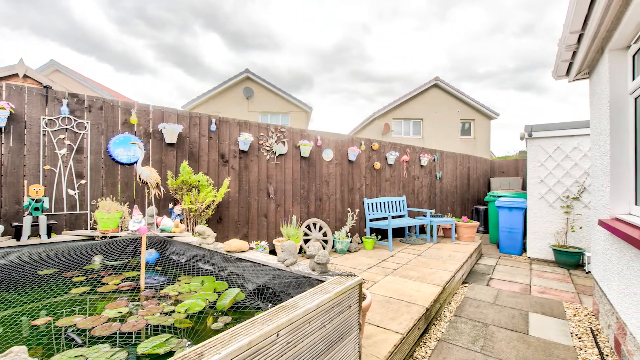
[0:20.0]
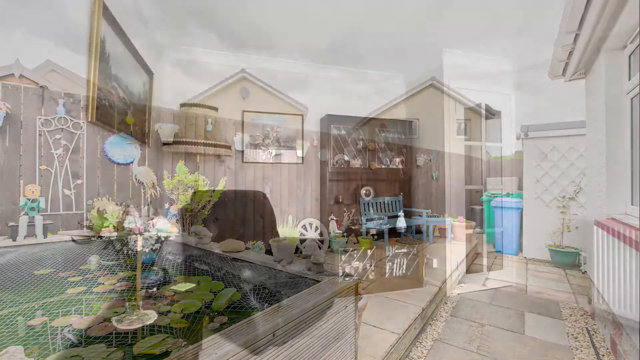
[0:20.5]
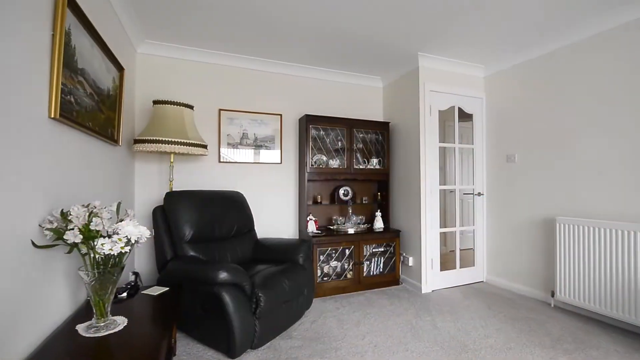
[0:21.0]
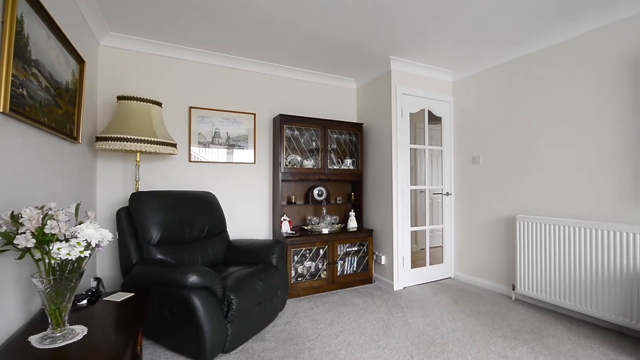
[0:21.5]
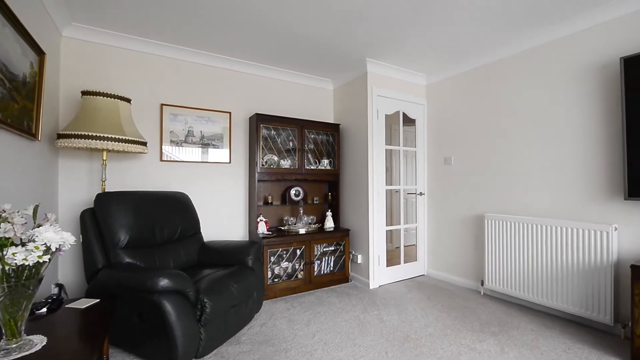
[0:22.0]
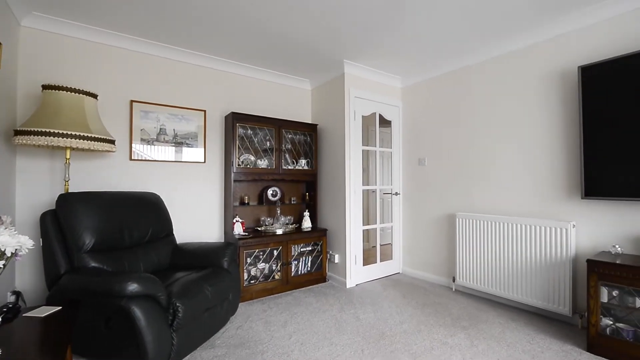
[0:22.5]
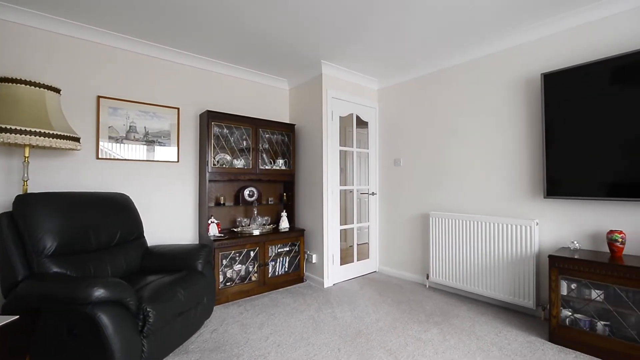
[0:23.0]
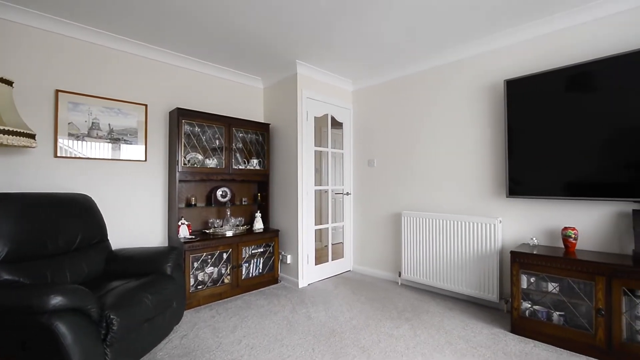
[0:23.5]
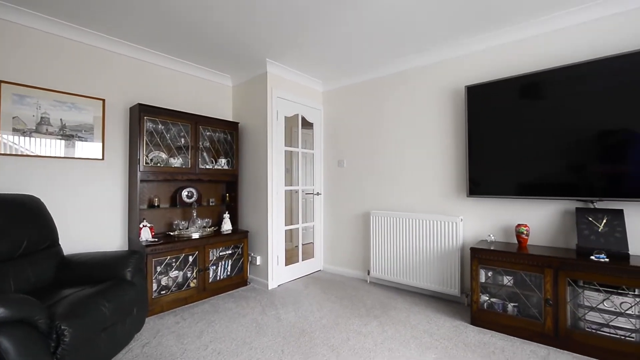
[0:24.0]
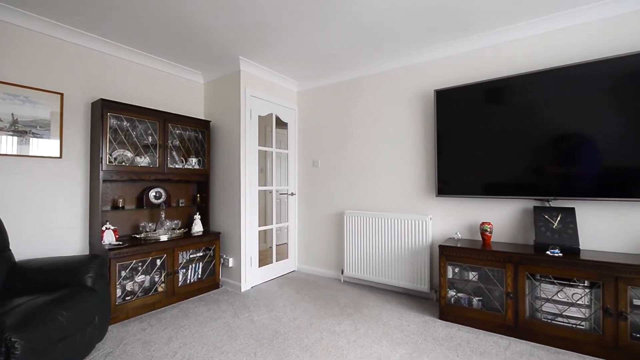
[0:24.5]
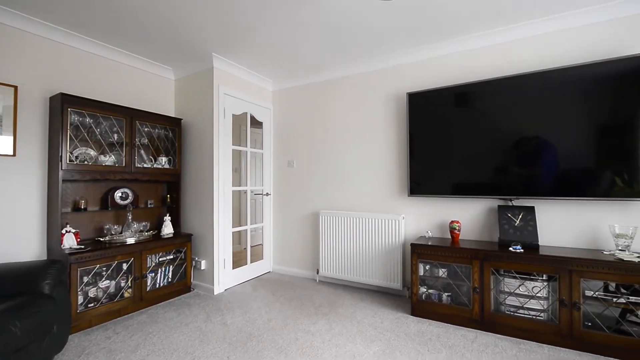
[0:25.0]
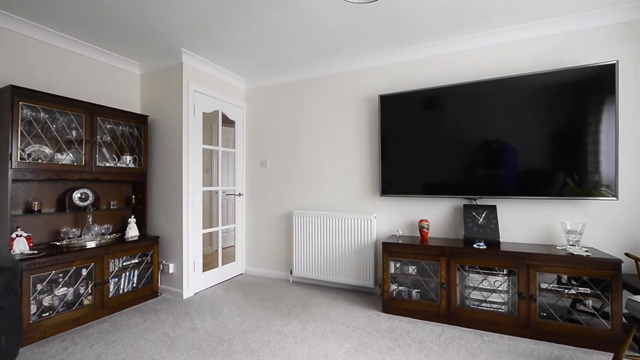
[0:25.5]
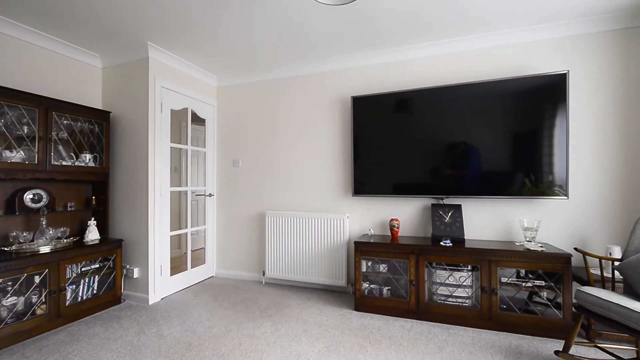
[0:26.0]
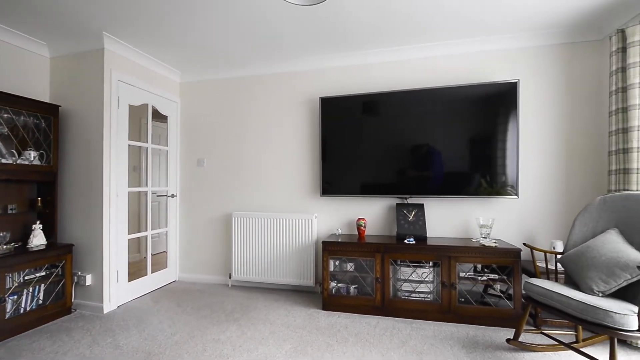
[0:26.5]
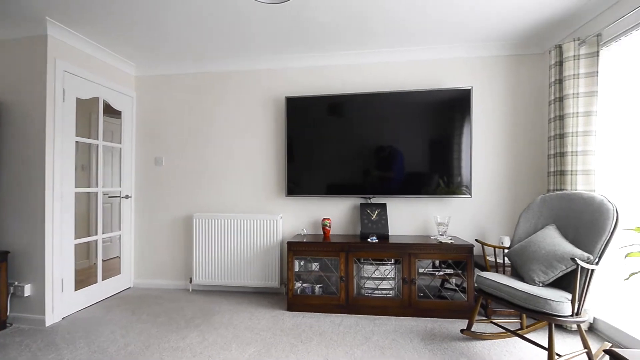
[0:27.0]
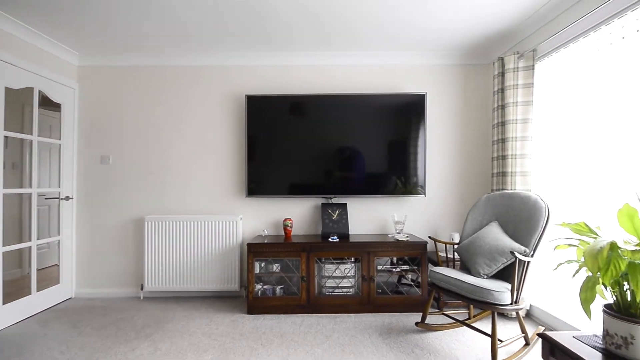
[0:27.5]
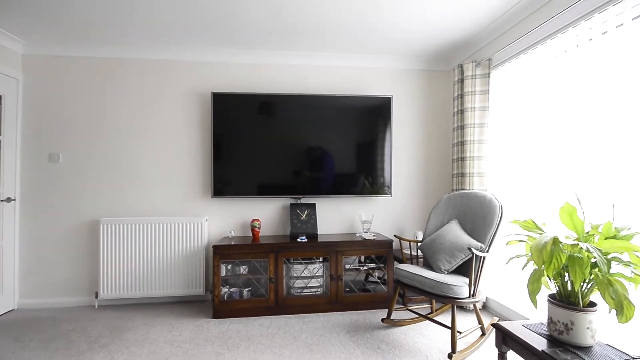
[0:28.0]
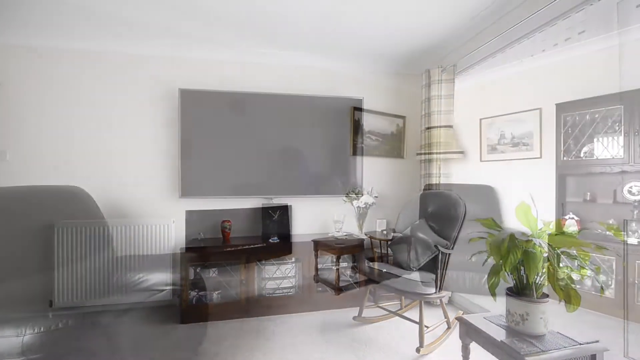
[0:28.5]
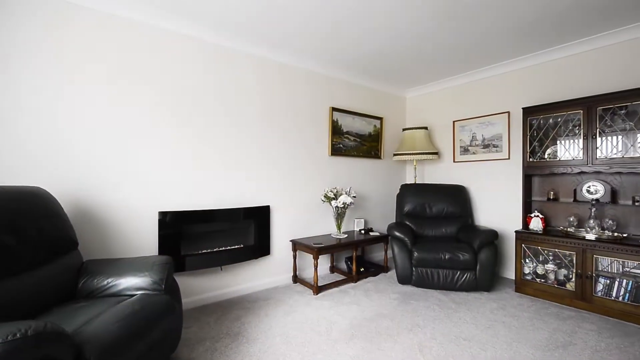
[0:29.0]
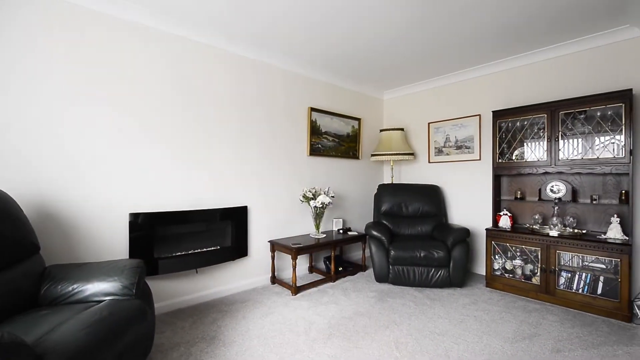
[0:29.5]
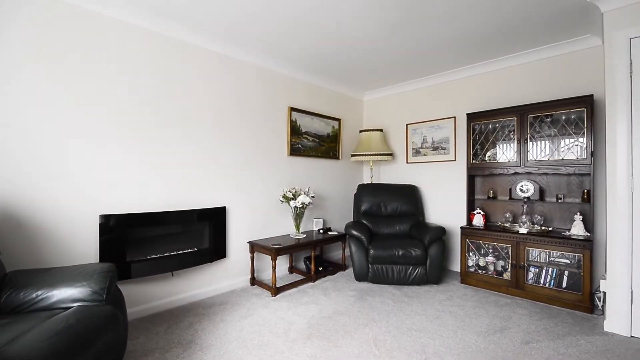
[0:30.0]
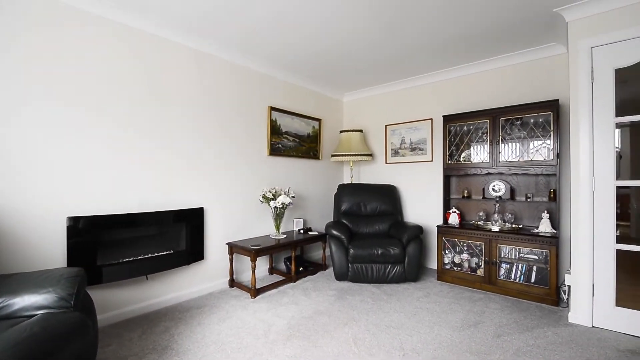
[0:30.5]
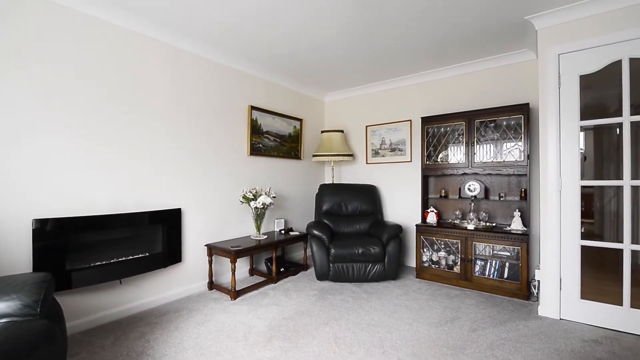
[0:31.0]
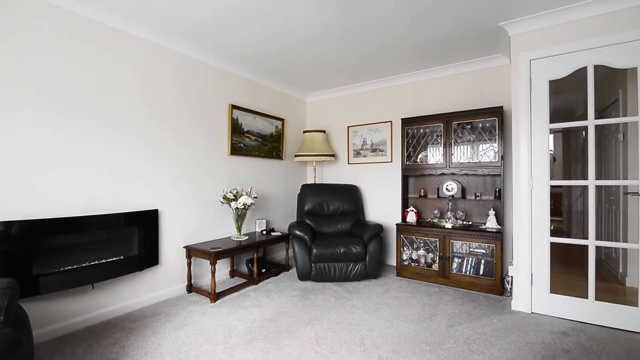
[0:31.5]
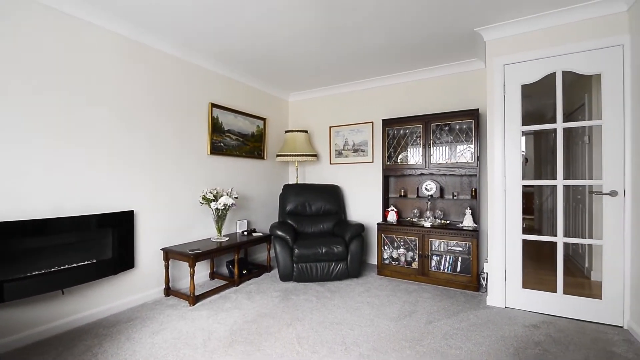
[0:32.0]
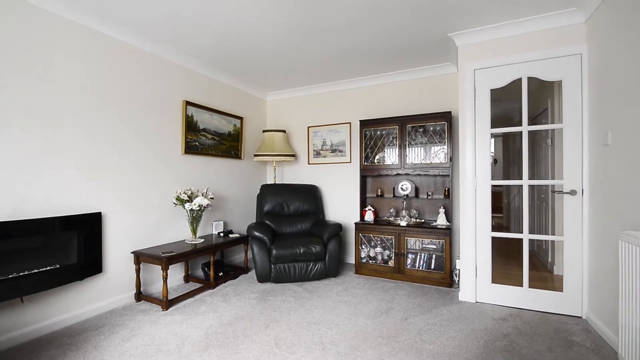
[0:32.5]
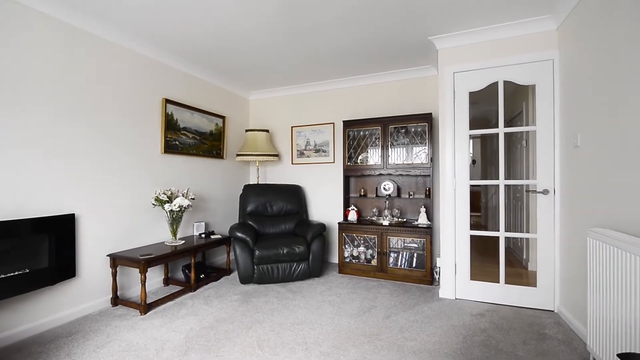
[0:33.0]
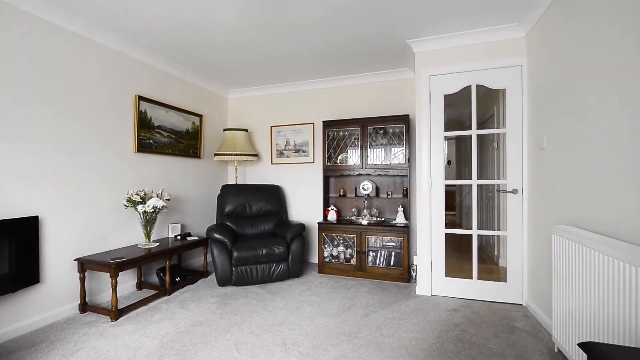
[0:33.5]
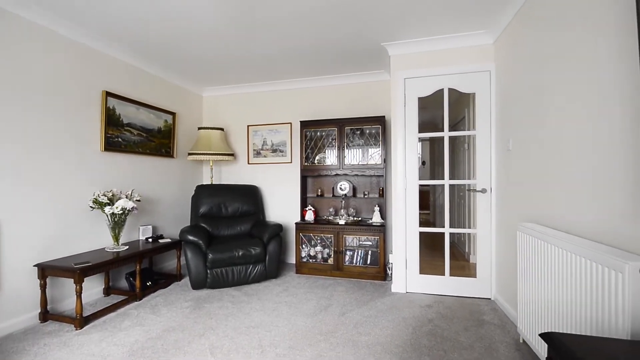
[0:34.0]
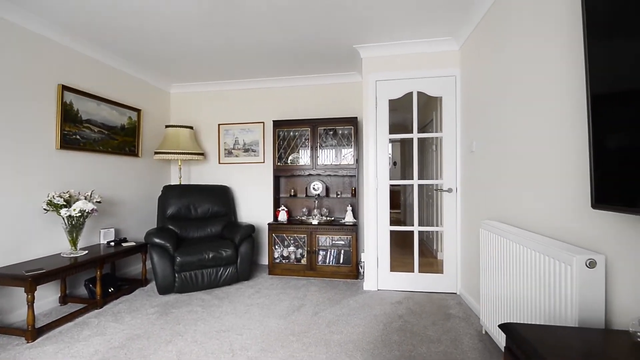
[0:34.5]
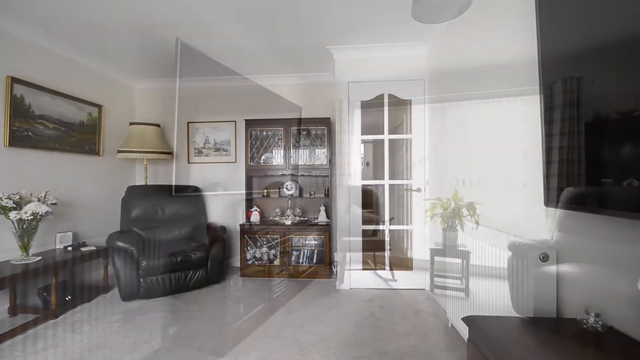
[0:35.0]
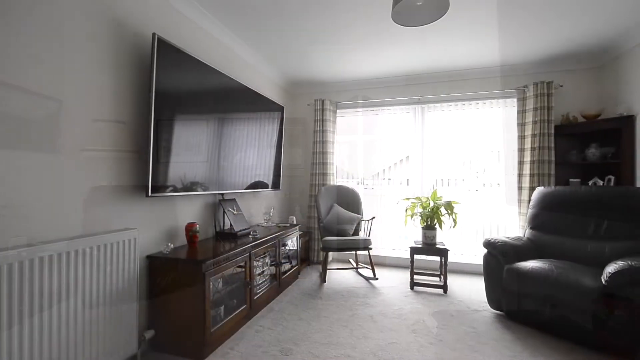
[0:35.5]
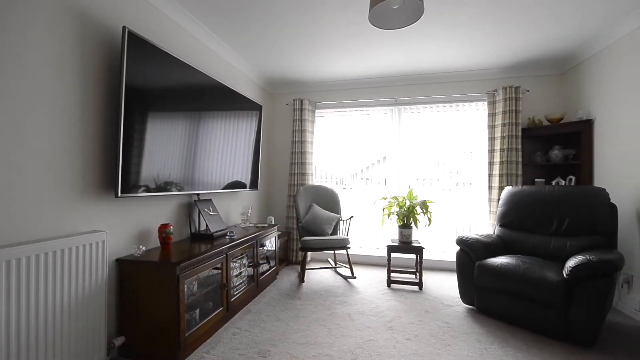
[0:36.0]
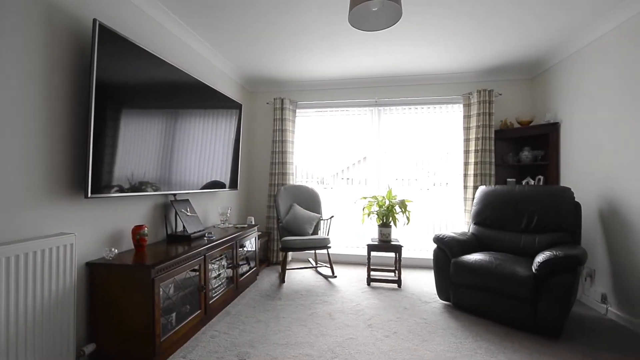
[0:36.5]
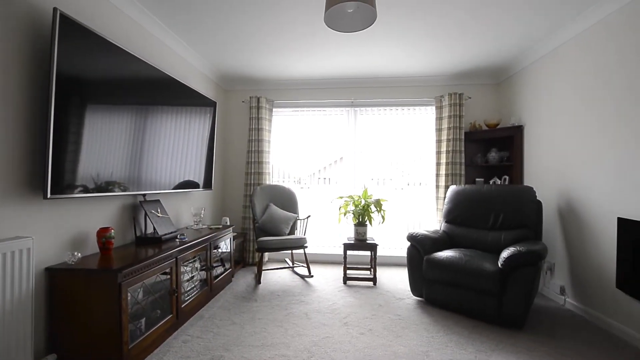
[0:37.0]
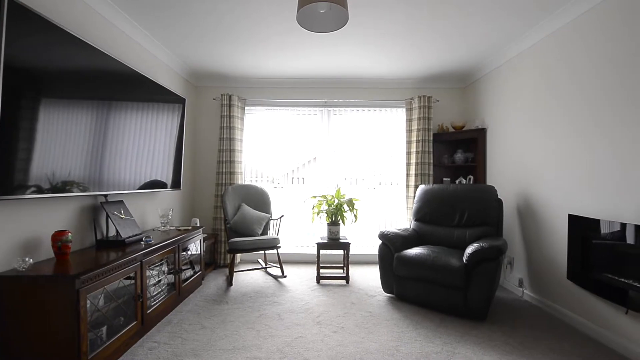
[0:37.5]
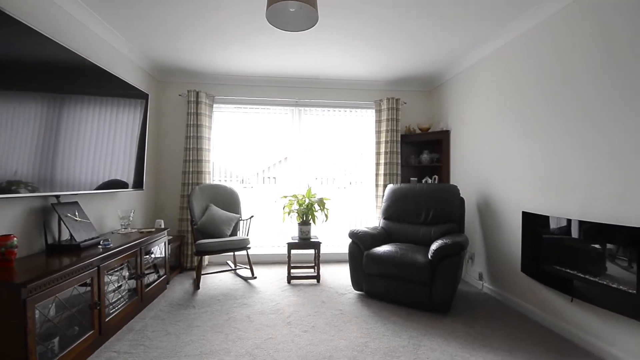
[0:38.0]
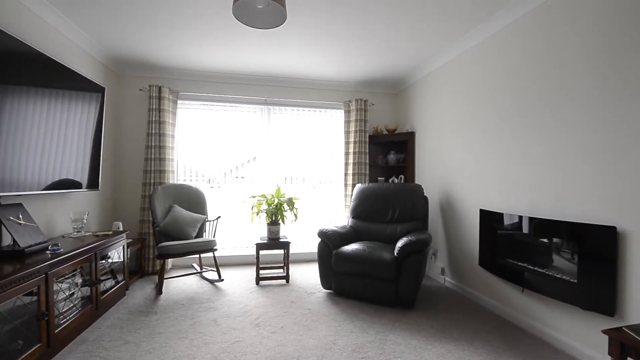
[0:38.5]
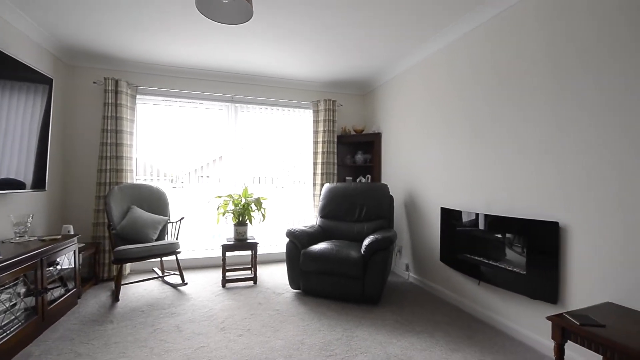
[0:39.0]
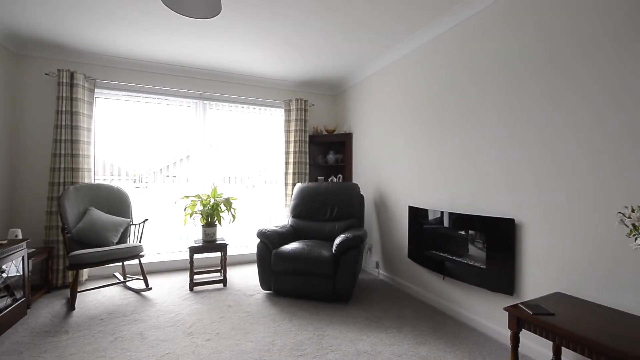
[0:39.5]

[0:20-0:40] A rear shot of the bungalow shows the raised fish tank on the left-hand side, the brown fence with pots hanging on it, a blue bench and table at the far end, some terracotta pots, paving stone on the ground, and a green bin and a blue bin in the distance. The video moves to an interior shot that is not a still but apparently an actual pan from some kind of device, showing different views of the living room. The interior has quite muted tones, with big black chairs, white doors, standard lamps, some pictures on the wall and some Welsh dressers. A very big TV is on the wall, along with a clock that appears to show about five to one. There are a couple of rocking chairs, a pot plant and a vase of flowers, and everything looks very clean, if rather sterile. There are big patio doors and a corner display cabinet. The curtains have a sort of plaid pattern, and there is a white radiator. A red ornament is on the left-hand side of the cabinet beneath the TV, and some kind of fireplace or imitation fireplace is on the wall opposite the TV.